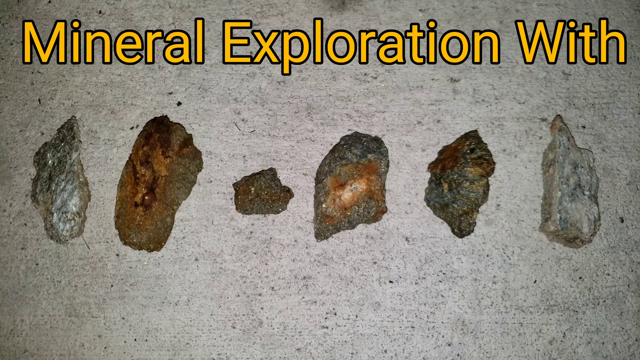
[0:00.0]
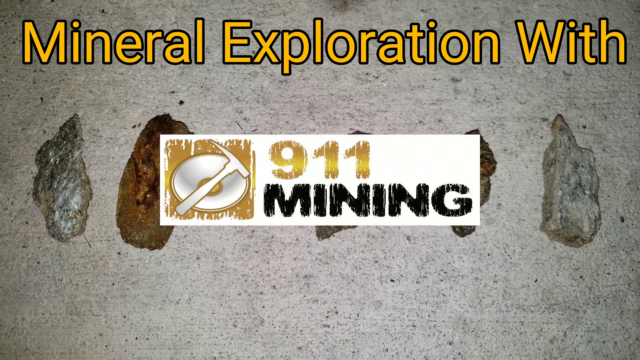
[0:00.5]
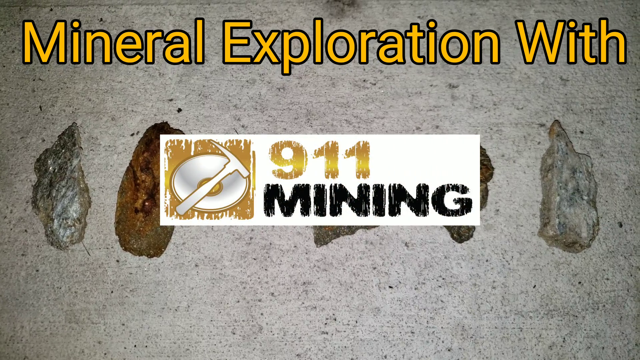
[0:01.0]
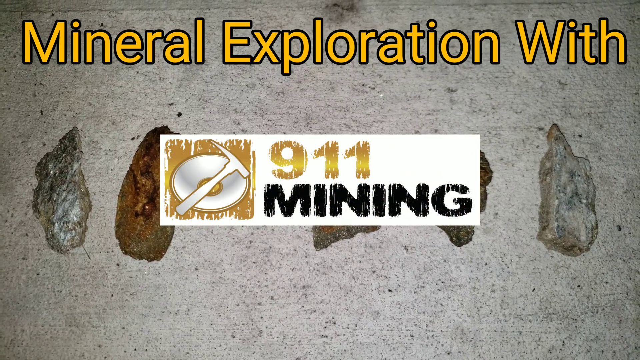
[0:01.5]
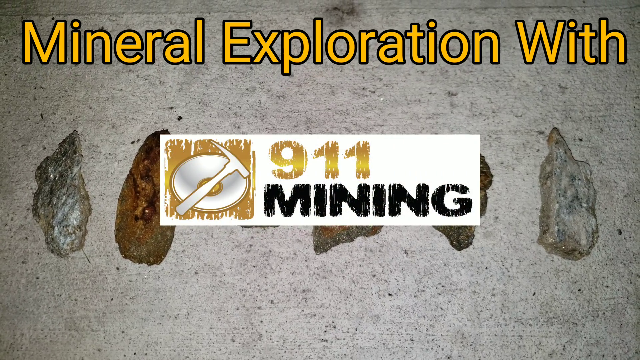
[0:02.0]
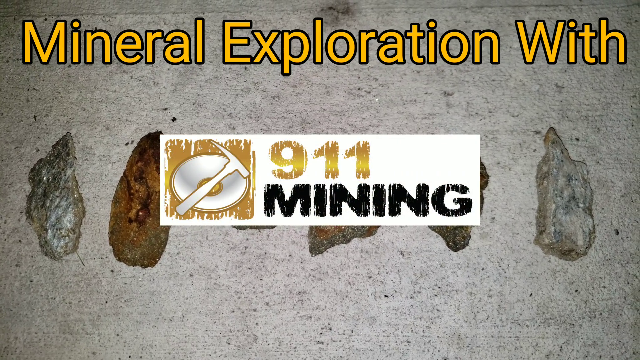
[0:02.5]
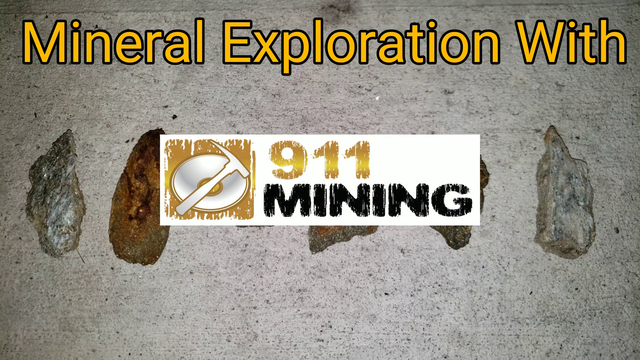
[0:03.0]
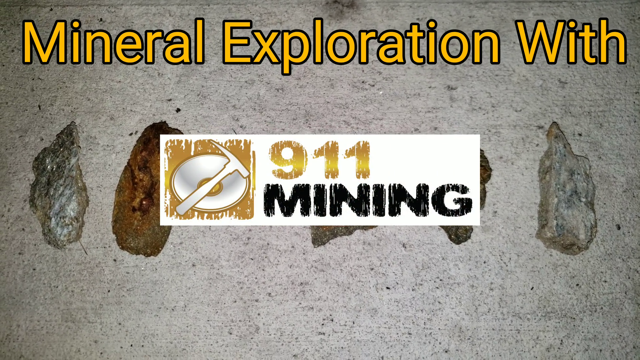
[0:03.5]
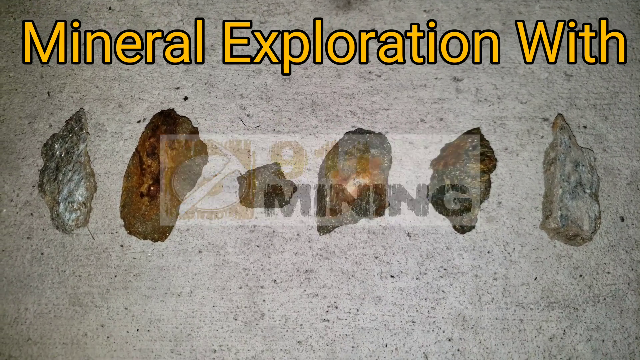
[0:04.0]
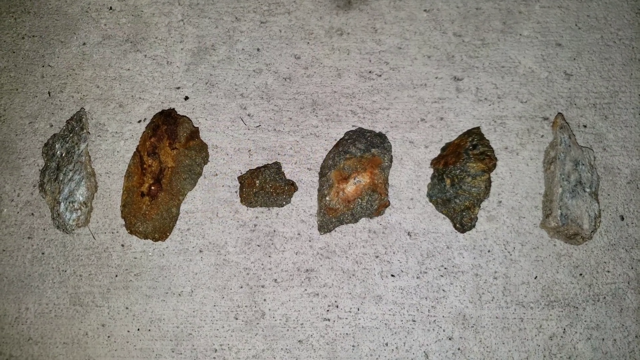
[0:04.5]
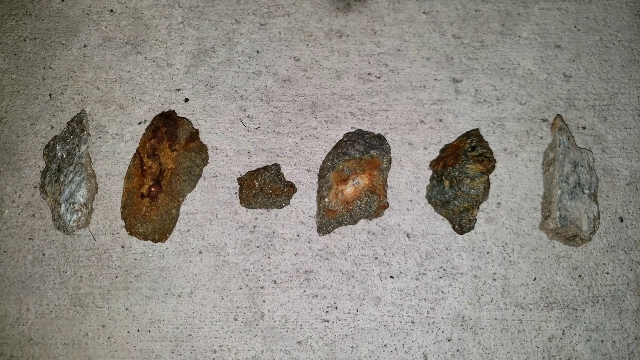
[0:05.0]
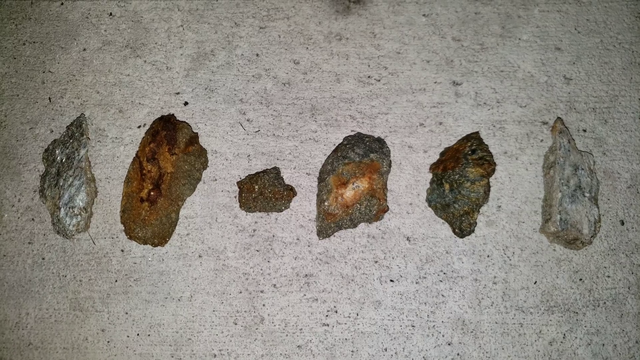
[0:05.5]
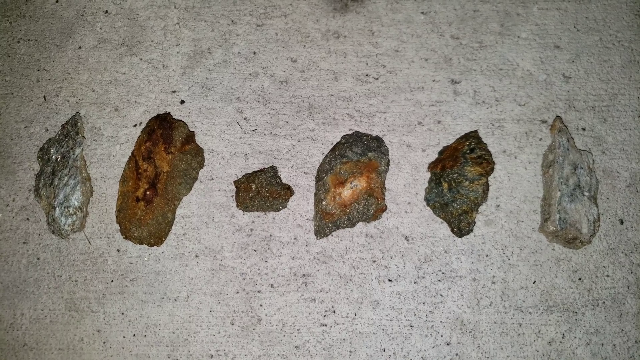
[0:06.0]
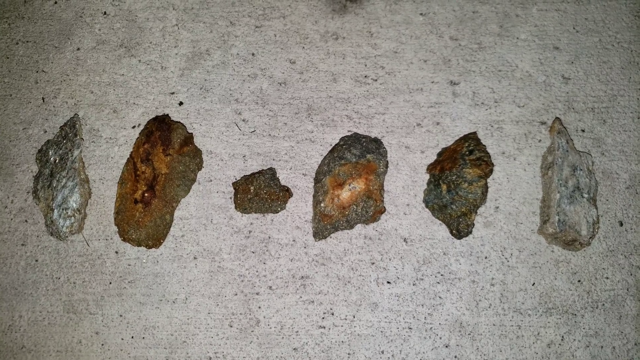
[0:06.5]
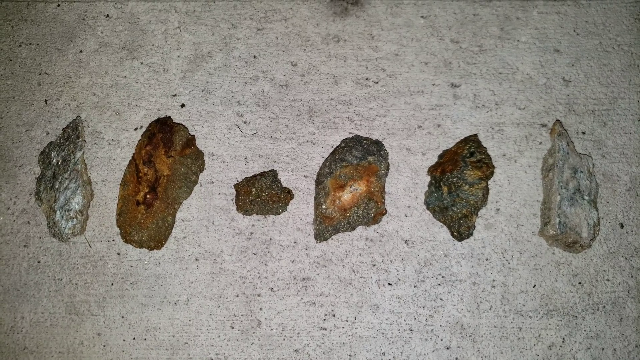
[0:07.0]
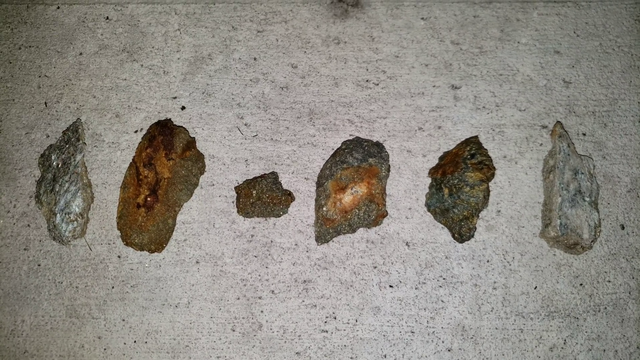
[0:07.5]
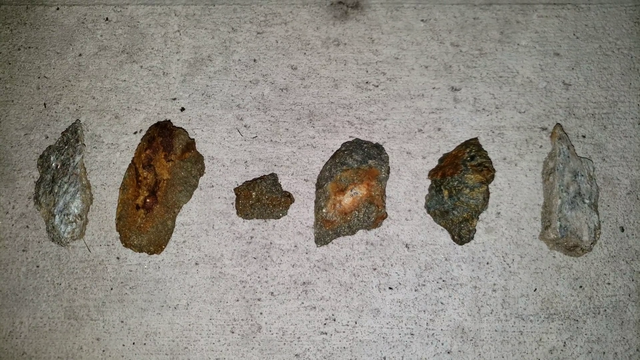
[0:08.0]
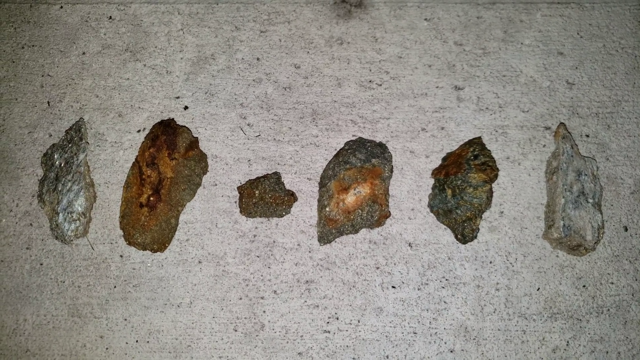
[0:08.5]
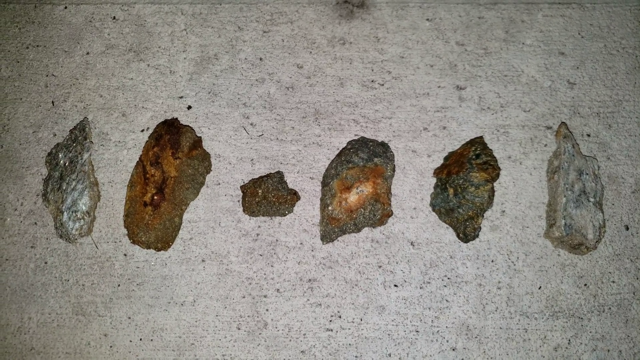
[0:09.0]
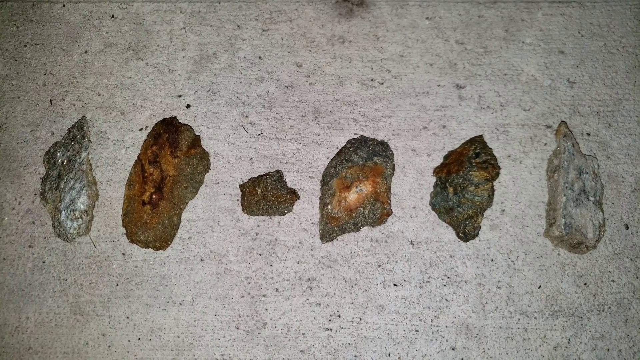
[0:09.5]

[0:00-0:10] The video opens with the title page for "Mineral Exploration with 9-1-1 Mining". There is a 9-1-1 Mining logo showing a round dish or plate with a hammer on top of it. In the background are examples of stones, six in total, with irregular edges and varying a little in size; one is smaller than the other five. The stones are shown on a grey background with little black flecks. The first stone has a sharp point and is silver in colour. The second is slightly larger and wider than the first, with slightly more rounded edges. The third is the small stone, with a point to the centre, and is grey. The fourth has a point at the bottom corner, a rounded top, and is grey with a slightly brown centre. The fifth has a point at either end and is mostly grey with some brown toward the top. The final stone is a lighter grey and looks slightly wider than the others, with a point at the top and a rounded bottom.